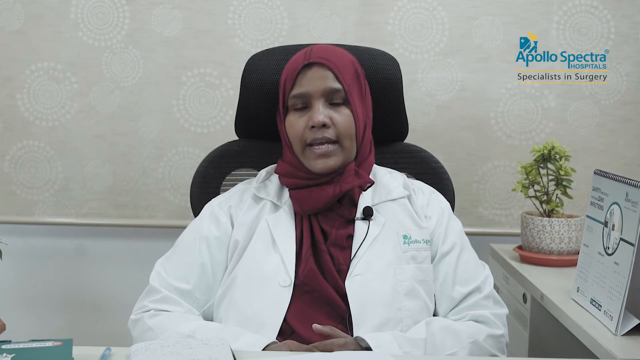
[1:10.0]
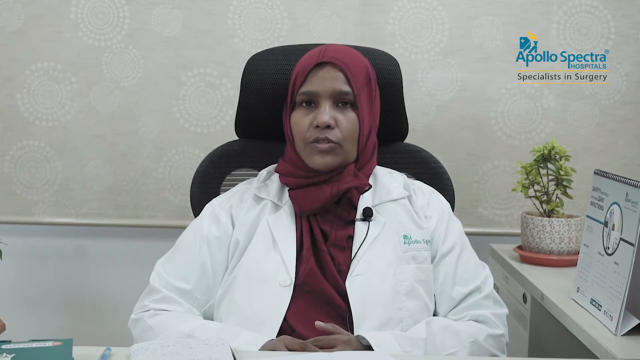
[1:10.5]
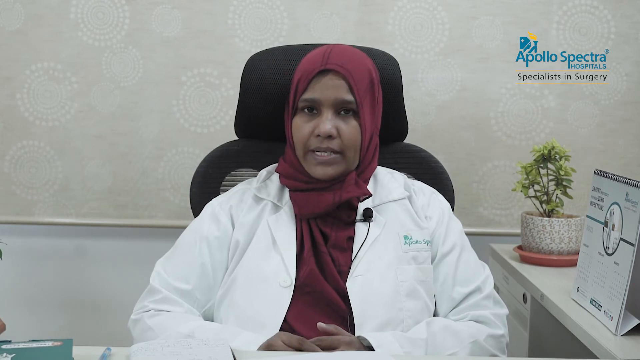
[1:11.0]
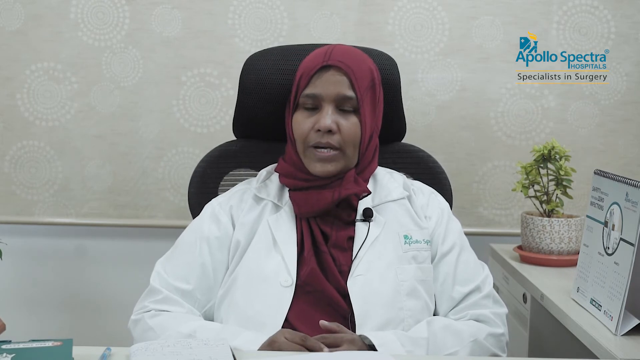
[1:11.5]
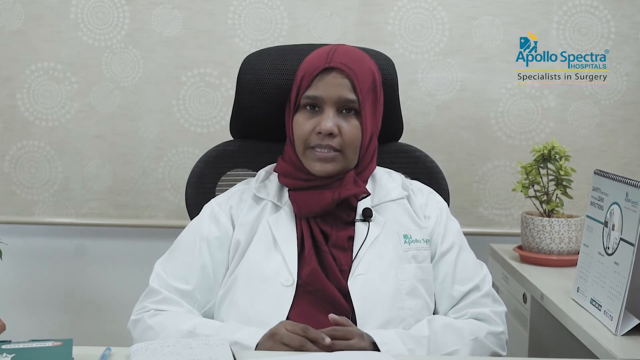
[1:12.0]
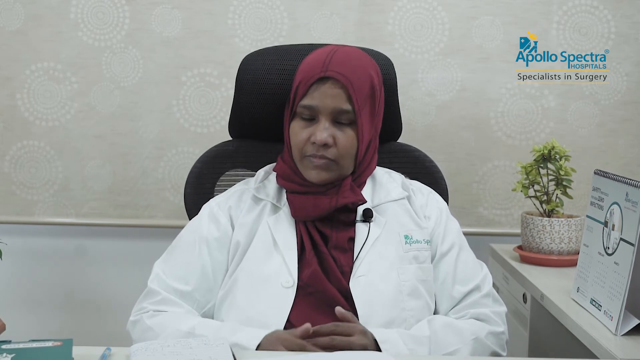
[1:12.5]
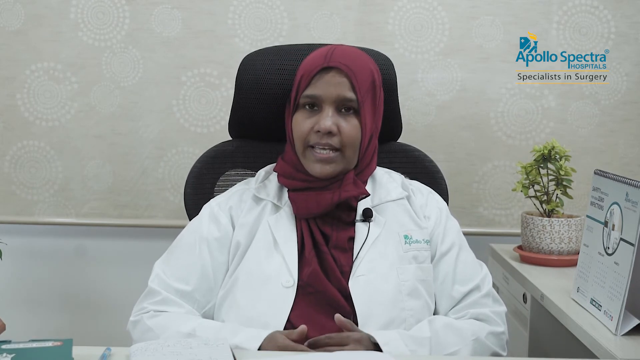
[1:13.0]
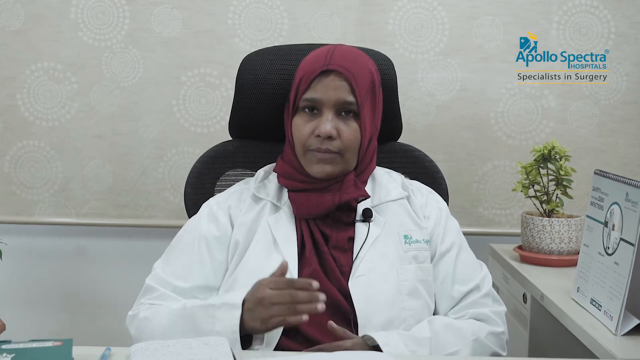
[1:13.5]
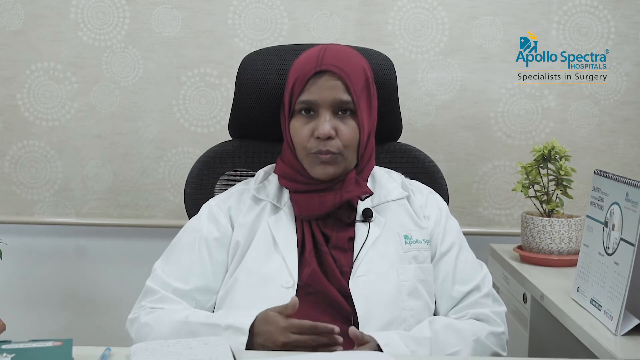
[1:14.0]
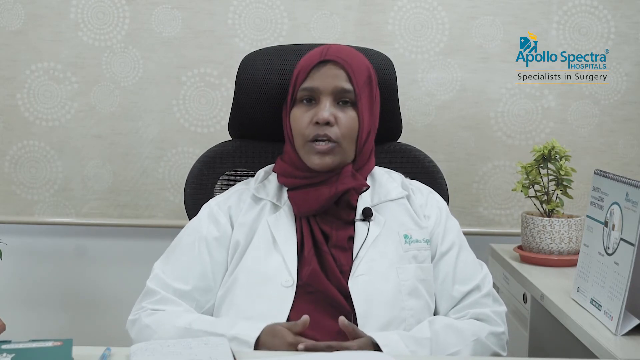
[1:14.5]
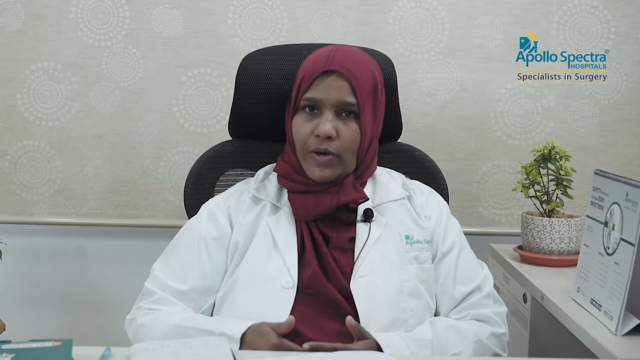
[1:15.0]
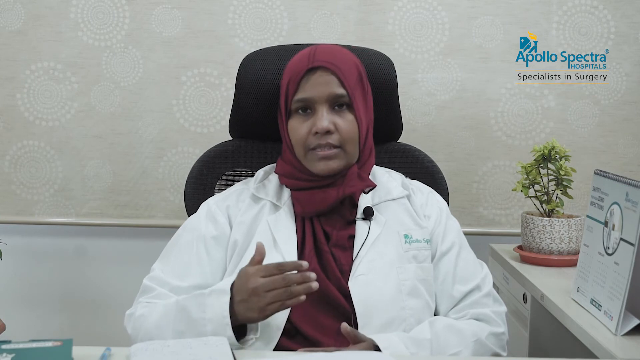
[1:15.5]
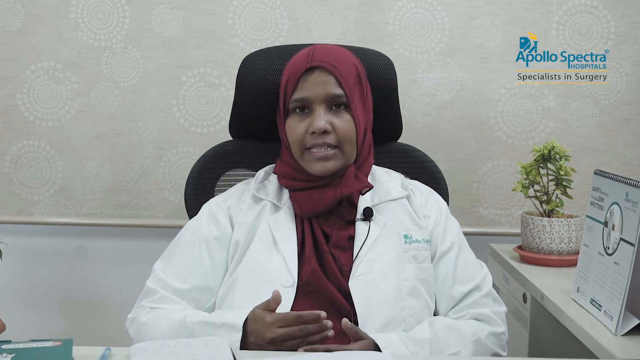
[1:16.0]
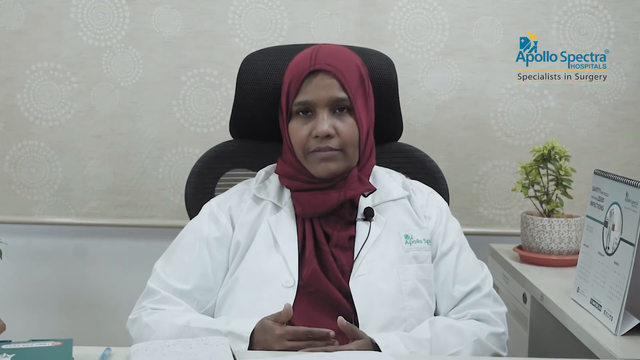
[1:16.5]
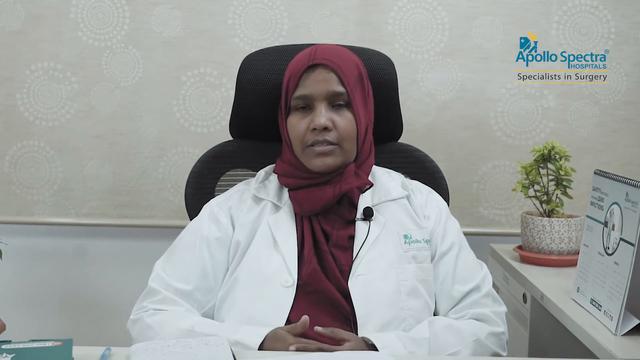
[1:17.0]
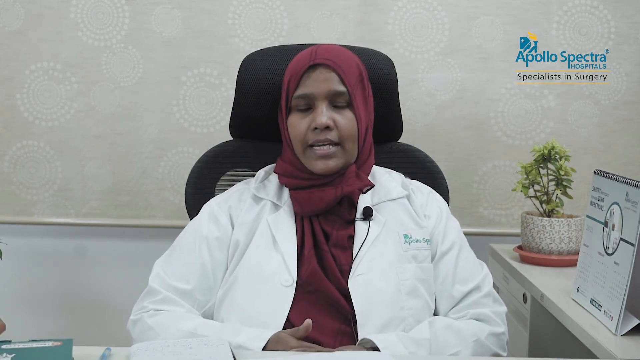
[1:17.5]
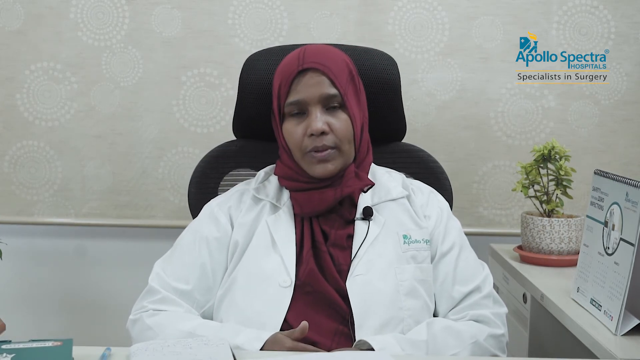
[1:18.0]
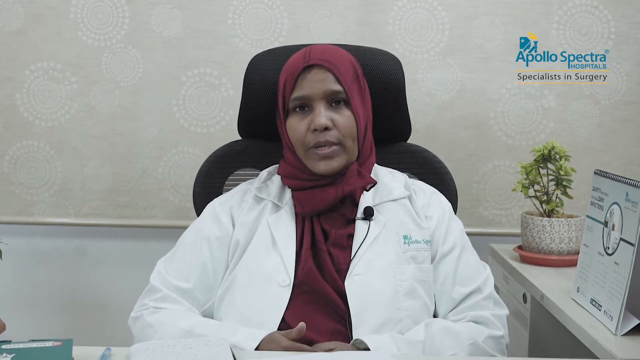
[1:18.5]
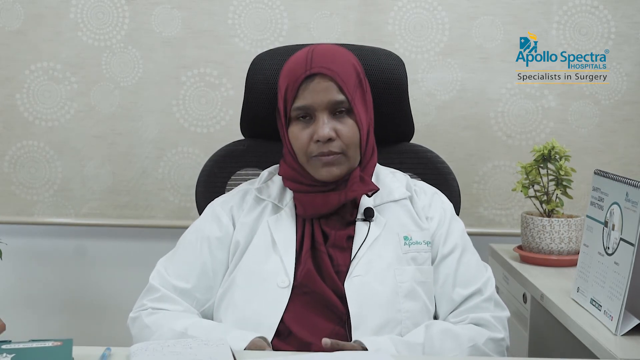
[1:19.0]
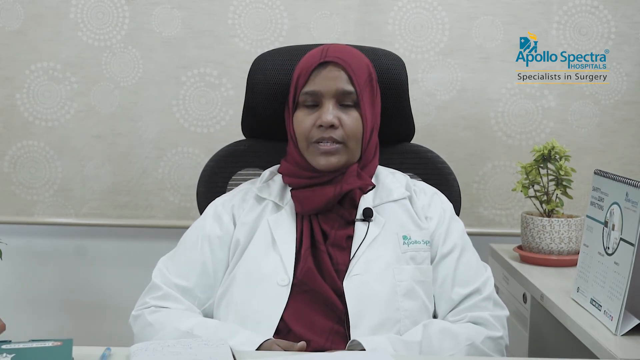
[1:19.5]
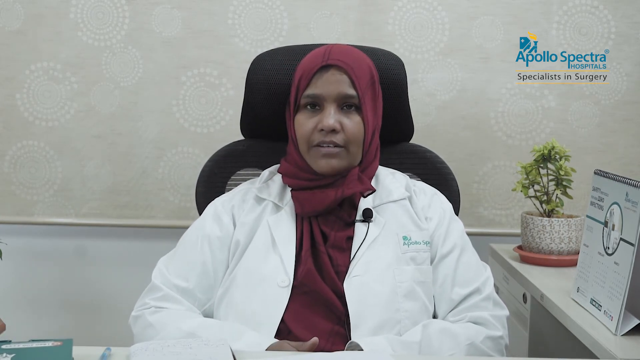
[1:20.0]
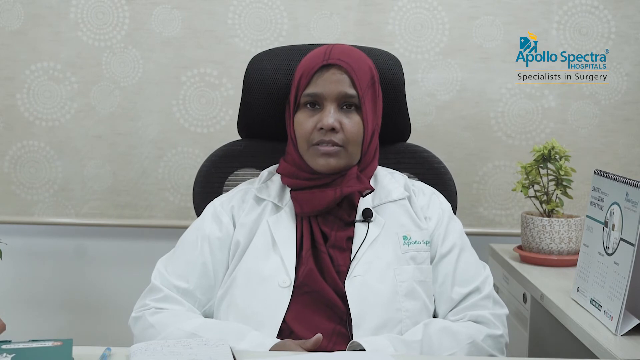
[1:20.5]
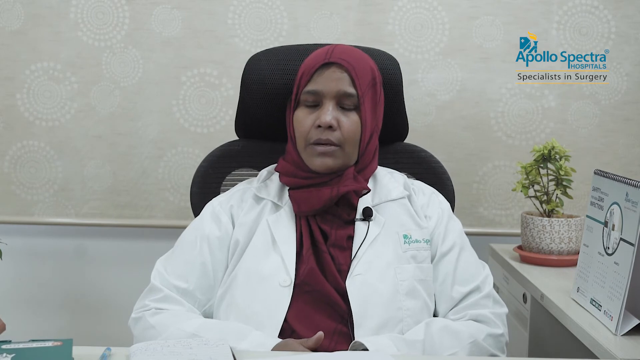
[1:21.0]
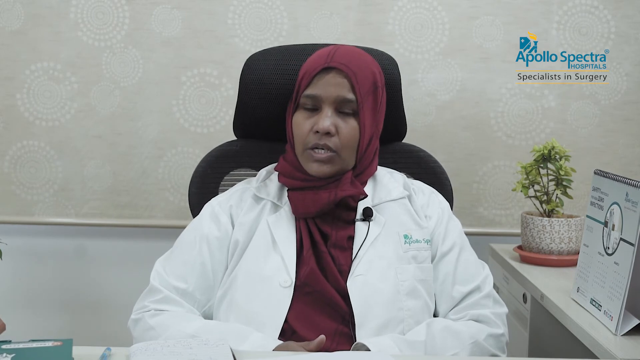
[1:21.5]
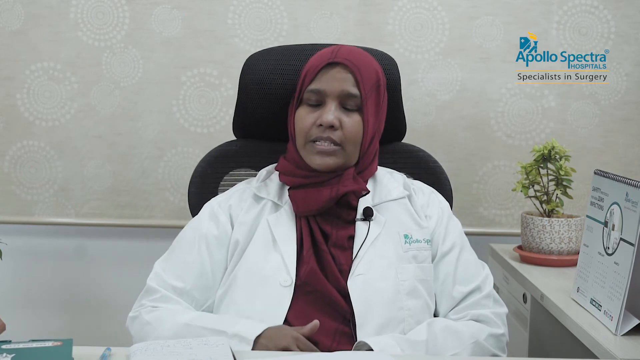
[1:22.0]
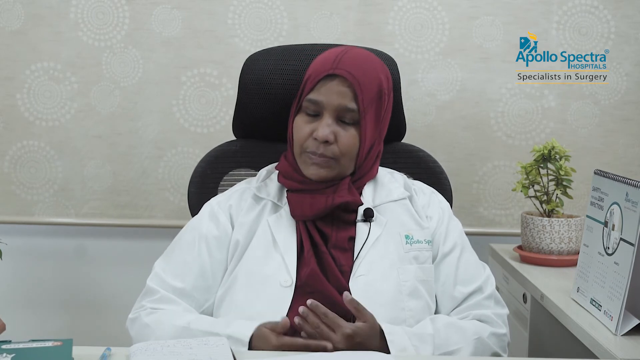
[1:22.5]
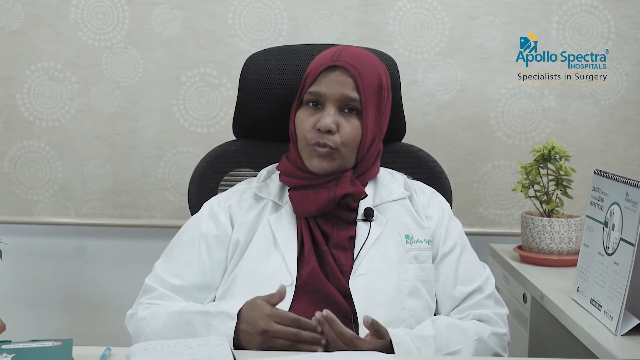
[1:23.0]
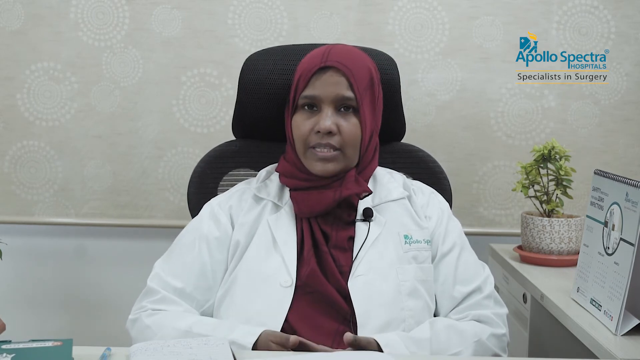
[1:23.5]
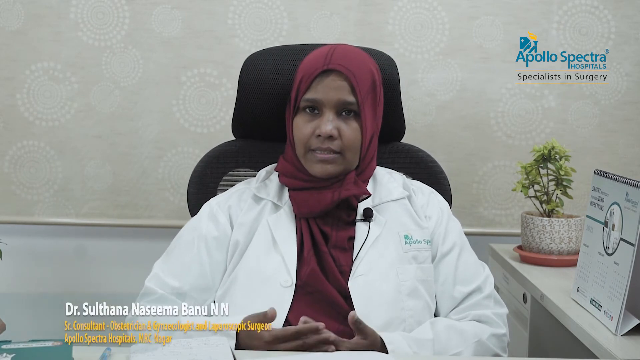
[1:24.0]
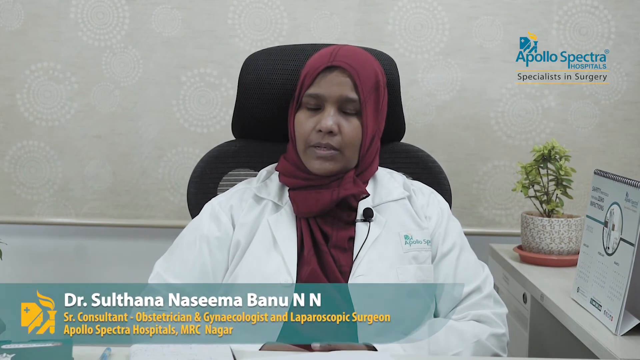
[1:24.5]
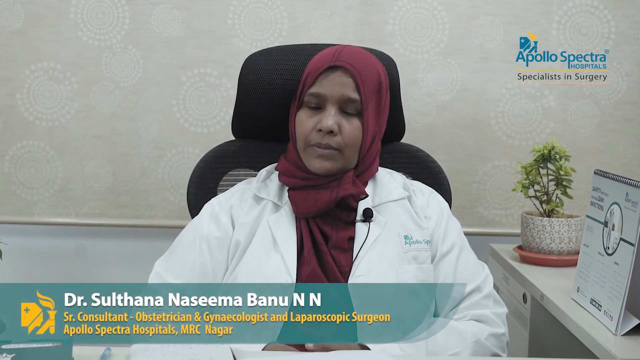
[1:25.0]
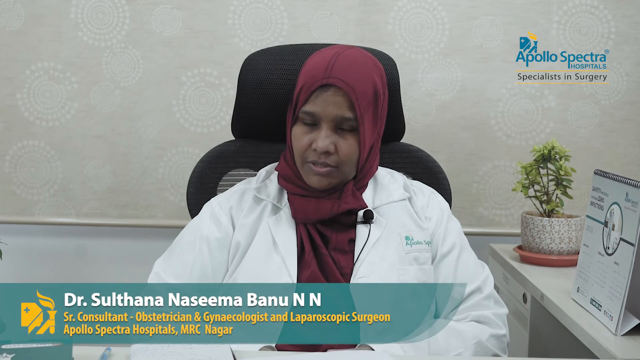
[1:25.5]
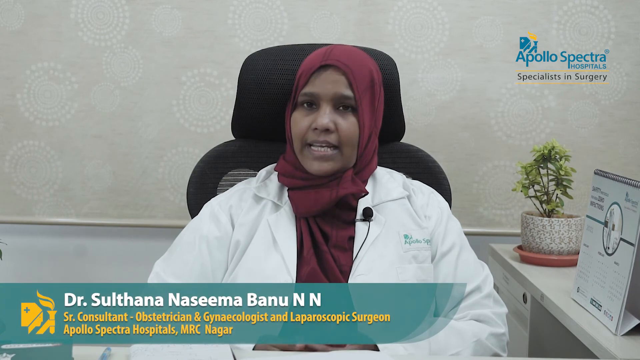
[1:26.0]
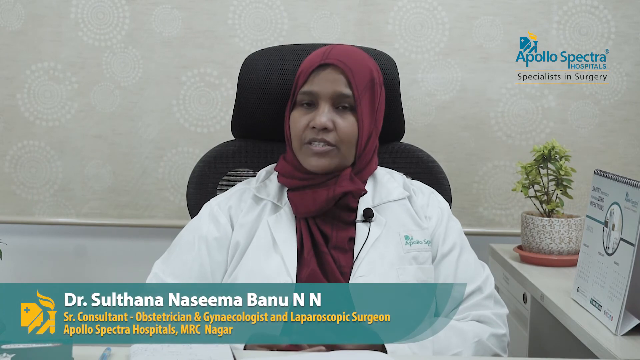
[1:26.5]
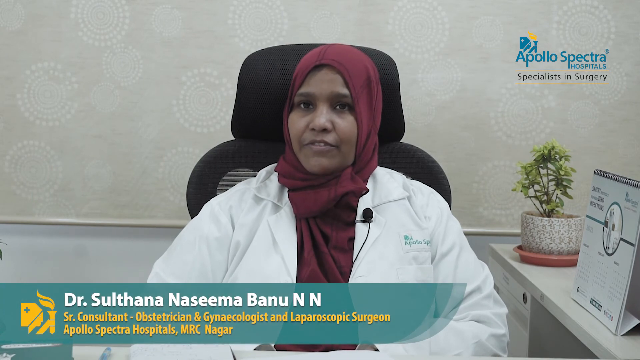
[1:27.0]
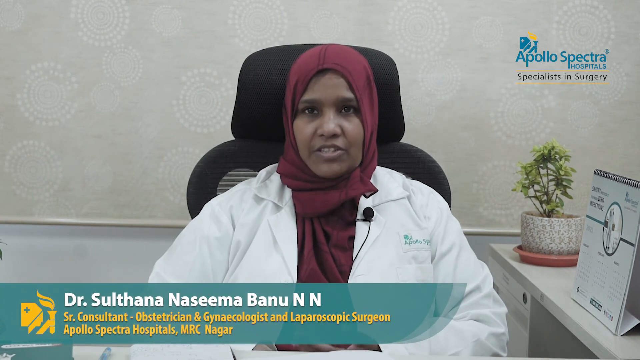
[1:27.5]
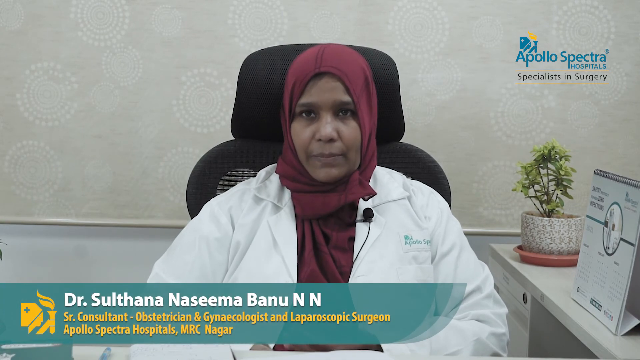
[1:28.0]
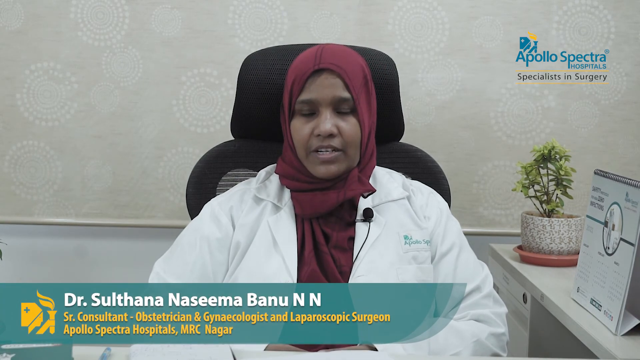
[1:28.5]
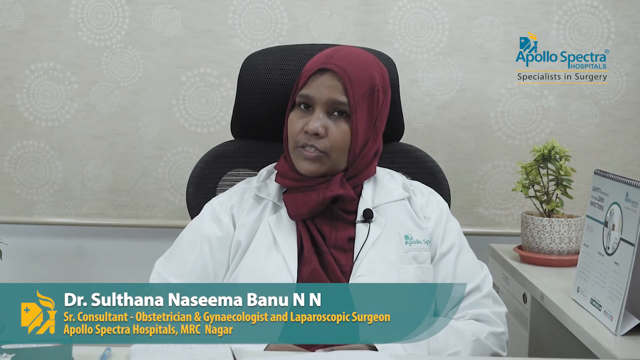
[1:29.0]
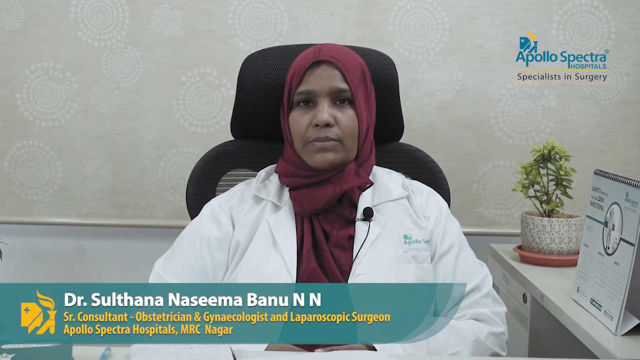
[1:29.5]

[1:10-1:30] A medical professional, apparently female, is sitting in a black office chair in front of a wall. She wears a red headscarf and a white doctor's jacket, with a black microphone pinned to the lapel. The top half of the wall has tan wallpaper with white spiral decorations and the bottom half has white paint, divided by some type of trim board. On the desk is a small green plant inside a vase on top of a tan coaster, along with a flip chart or some type of medical reference that is hard to make out. The words "Apollo Spectra Hospital Specialist in Surgery" appear at the top right of the video and stay present the entire time.